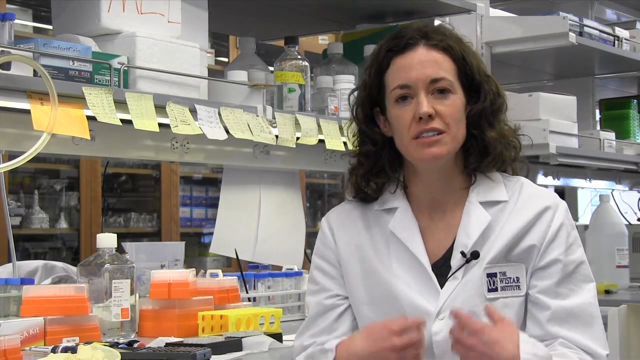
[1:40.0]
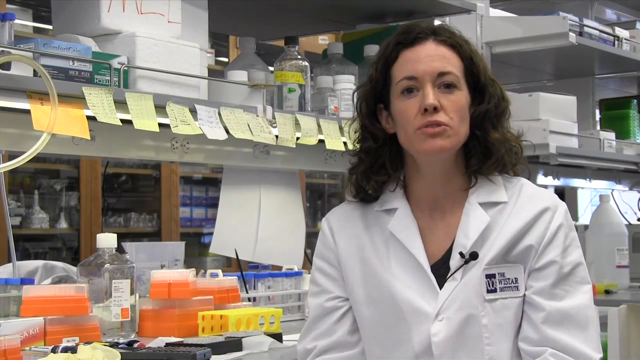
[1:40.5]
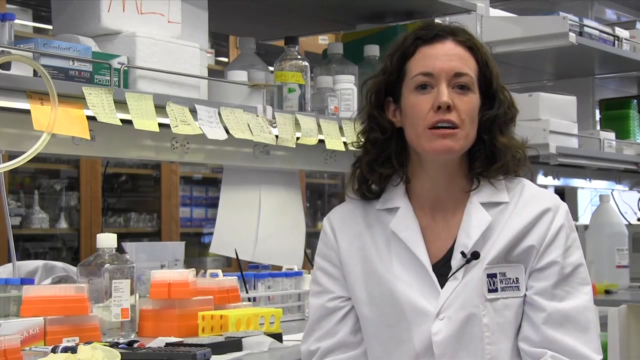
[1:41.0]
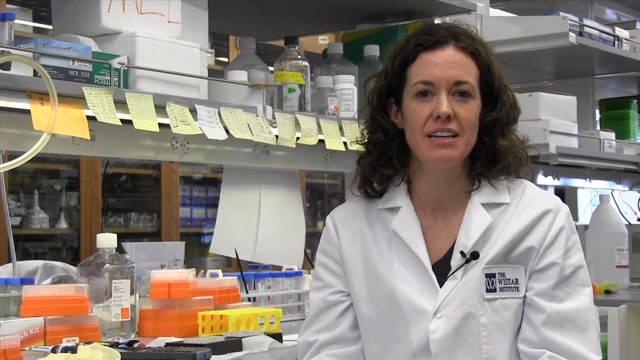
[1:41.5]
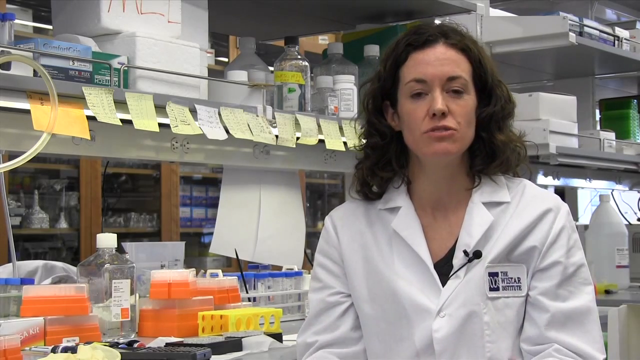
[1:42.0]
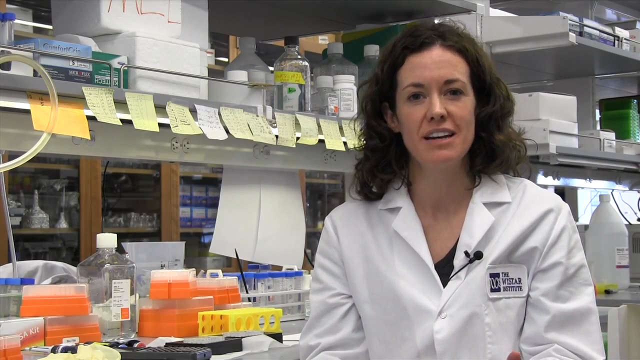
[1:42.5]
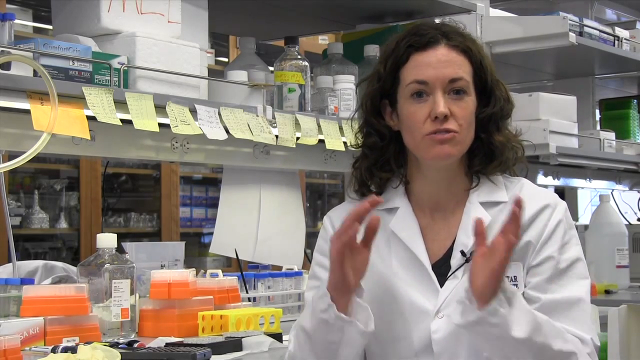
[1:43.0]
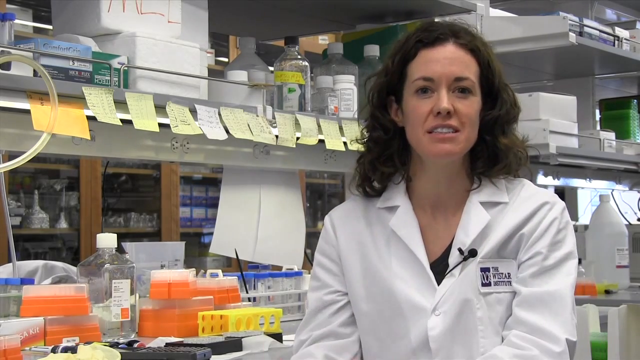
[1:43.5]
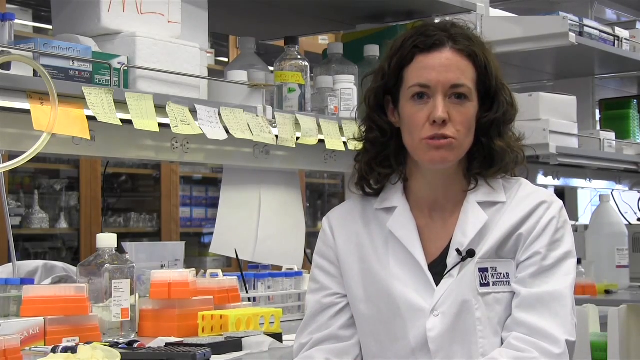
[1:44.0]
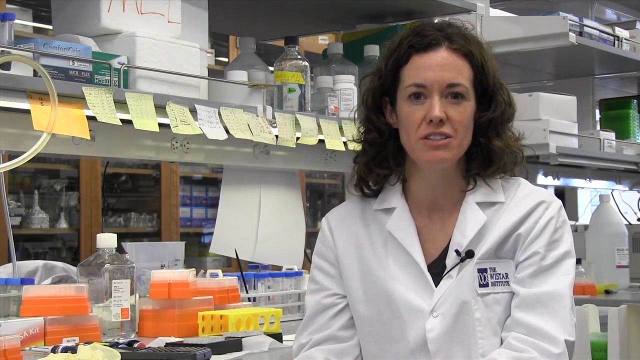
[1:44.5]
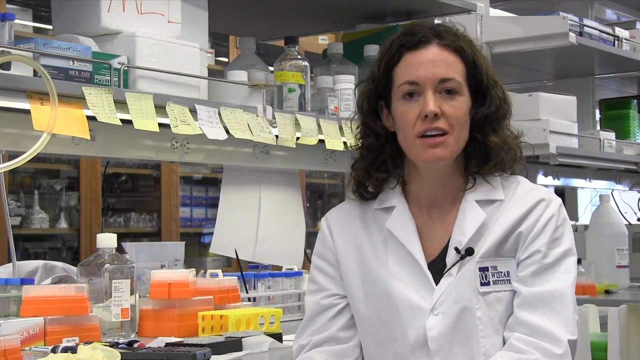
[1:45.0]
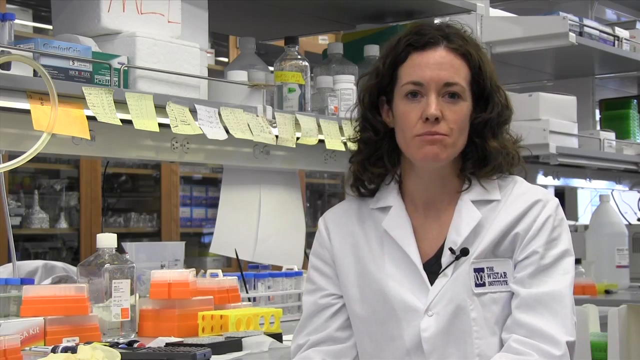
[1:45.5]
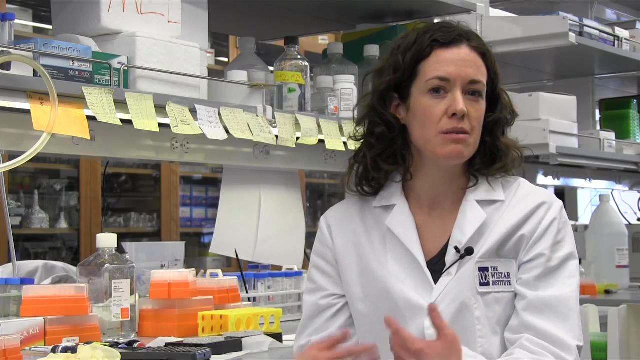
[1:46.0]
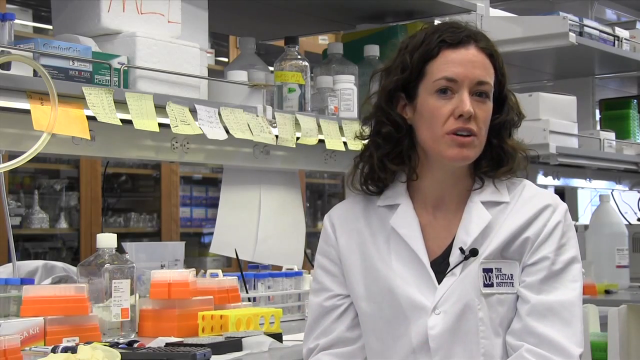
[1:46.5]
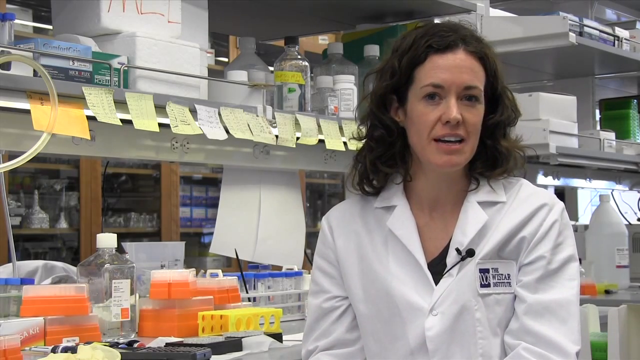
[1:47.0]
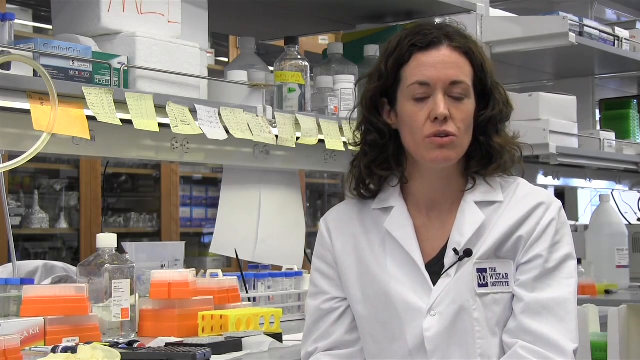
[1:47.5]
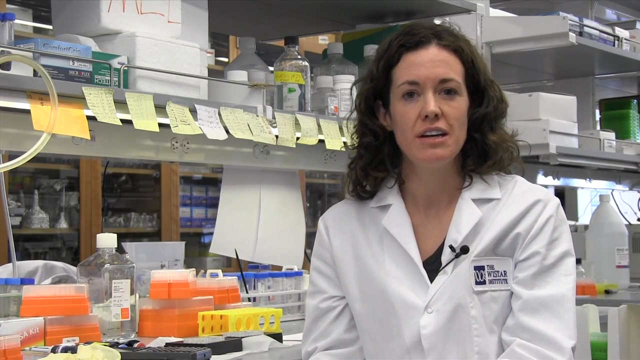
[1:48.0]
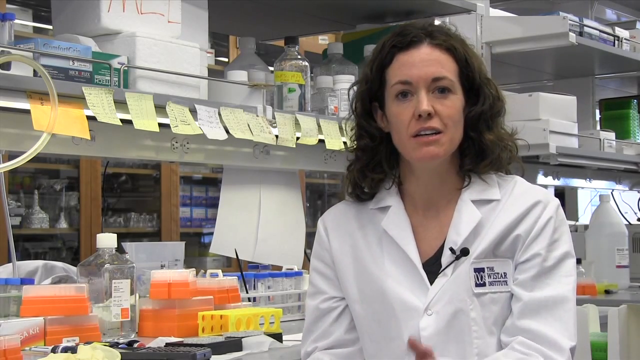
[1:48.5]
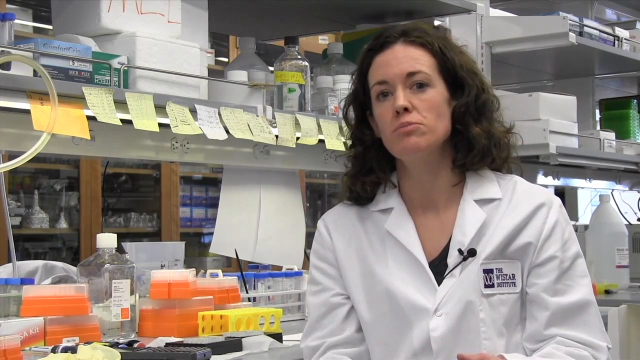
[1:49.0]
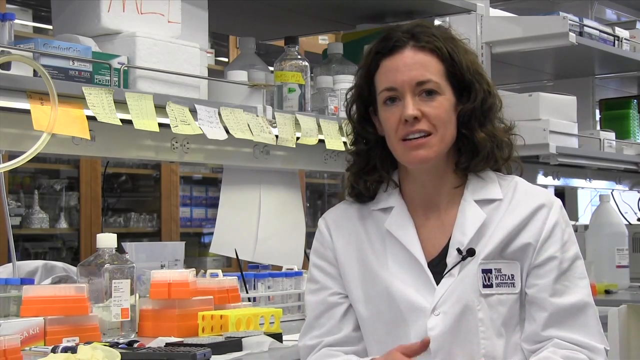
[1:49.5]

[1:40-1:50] In the lab, the woman continues to gesture, first with her right hand and then with both hands, which come up and then go down. At one point she holds her two hands with palms facing each other and shows something moving from her left to her right. She moves her head more than anything, but occasionally makes a rolling motion with her hands, one in front of the other, as she talks.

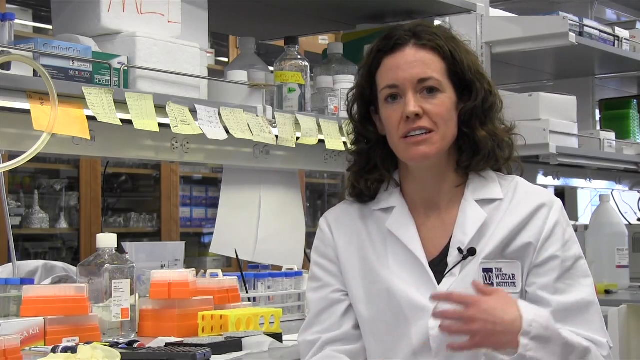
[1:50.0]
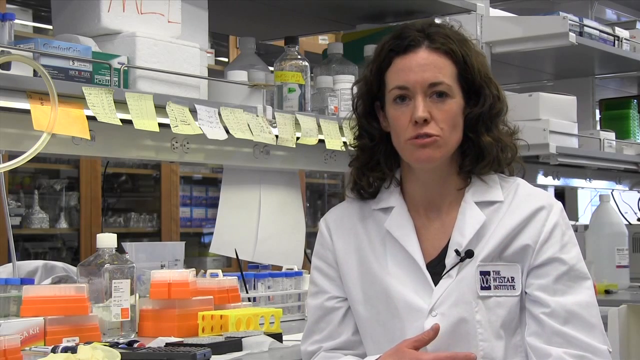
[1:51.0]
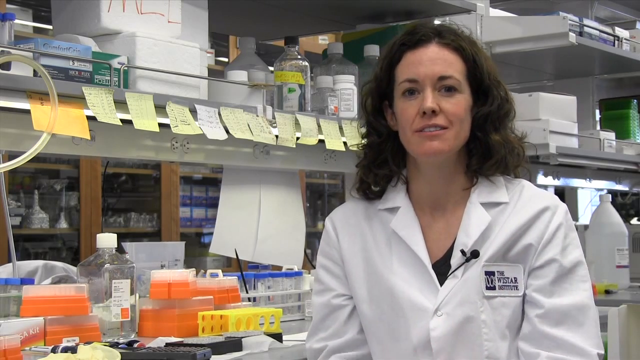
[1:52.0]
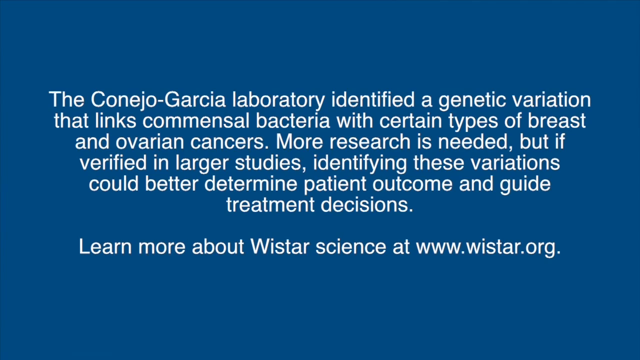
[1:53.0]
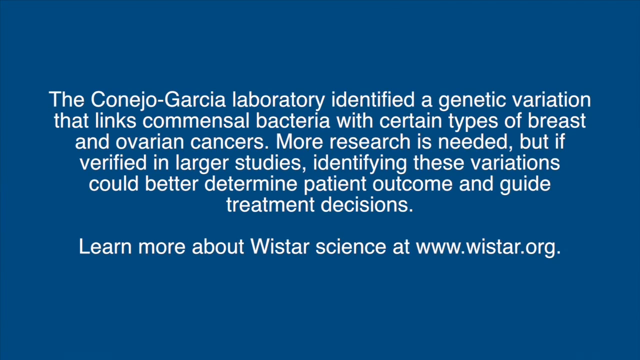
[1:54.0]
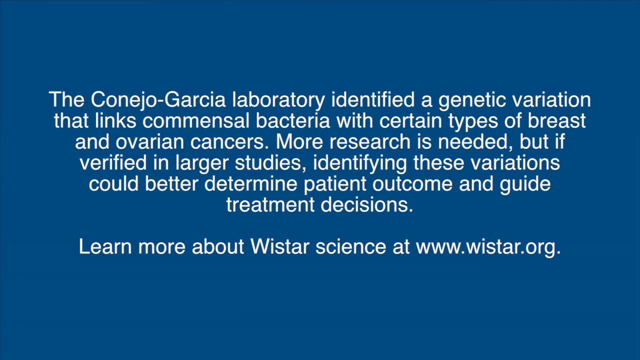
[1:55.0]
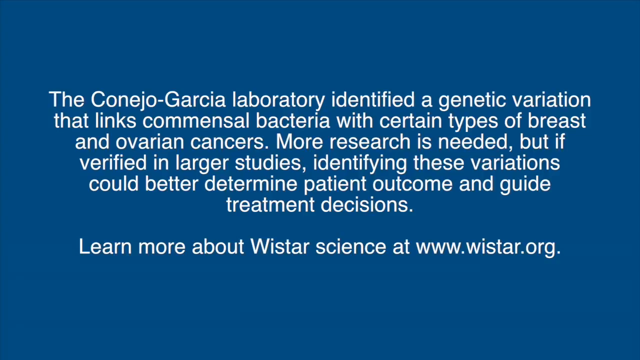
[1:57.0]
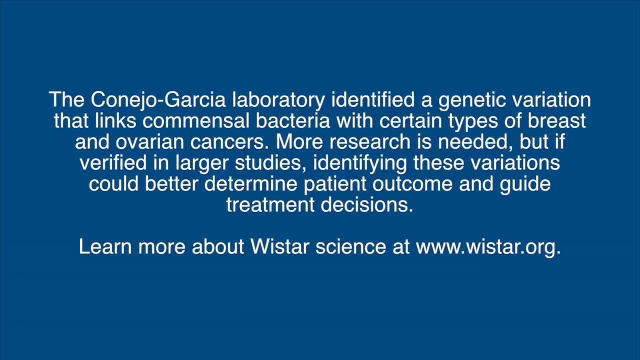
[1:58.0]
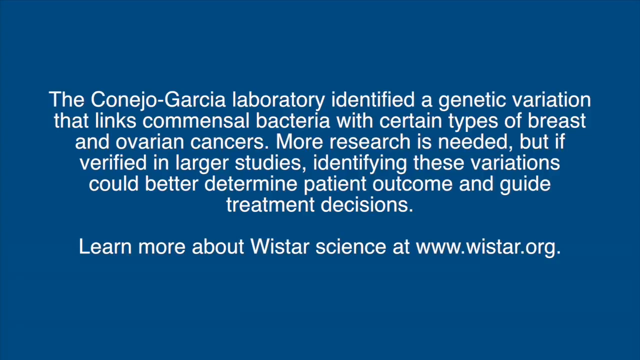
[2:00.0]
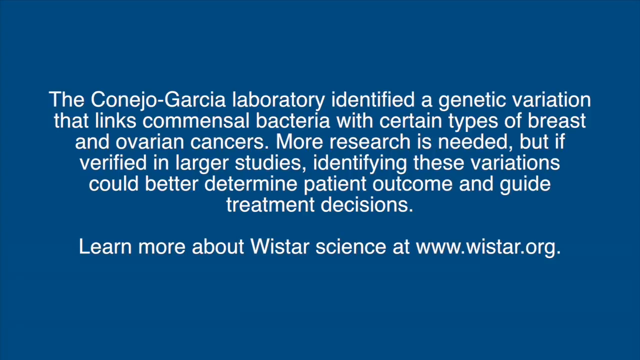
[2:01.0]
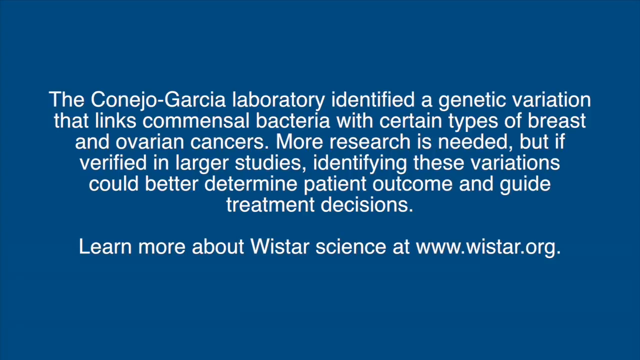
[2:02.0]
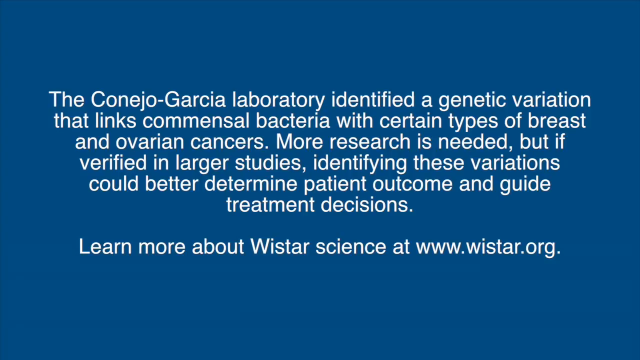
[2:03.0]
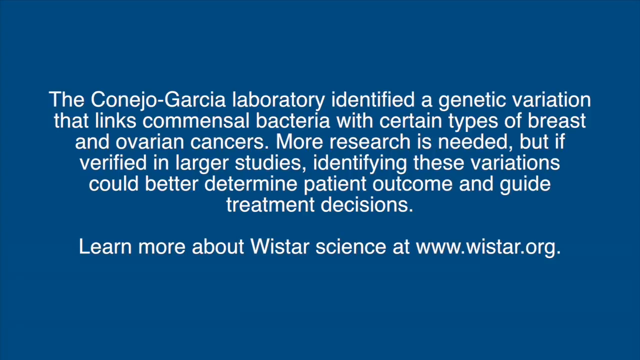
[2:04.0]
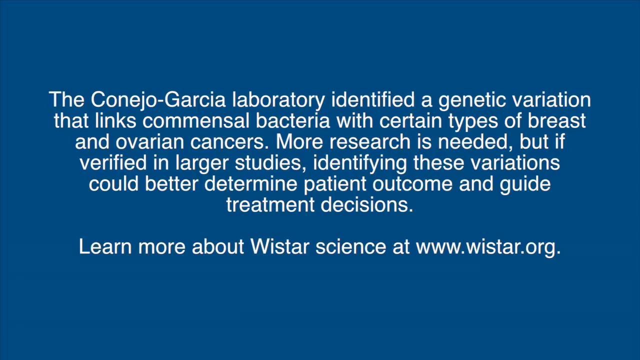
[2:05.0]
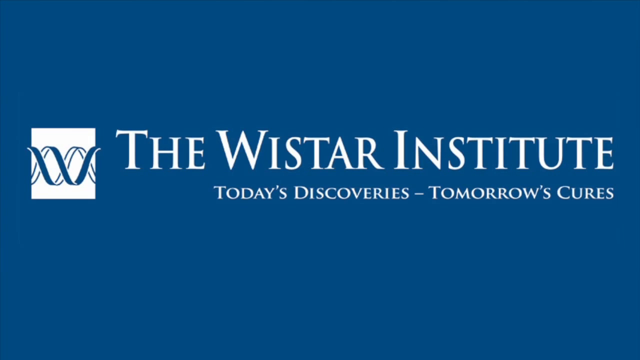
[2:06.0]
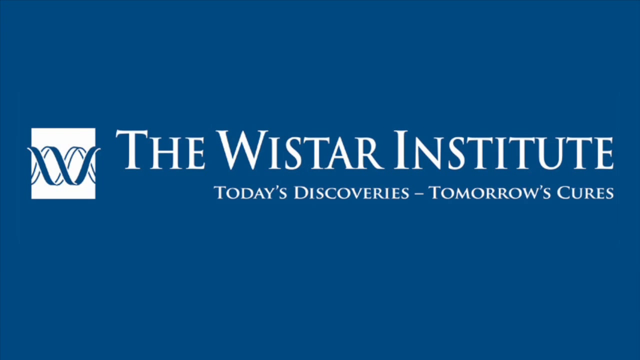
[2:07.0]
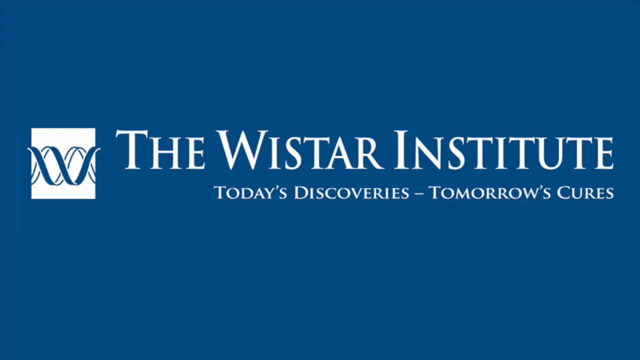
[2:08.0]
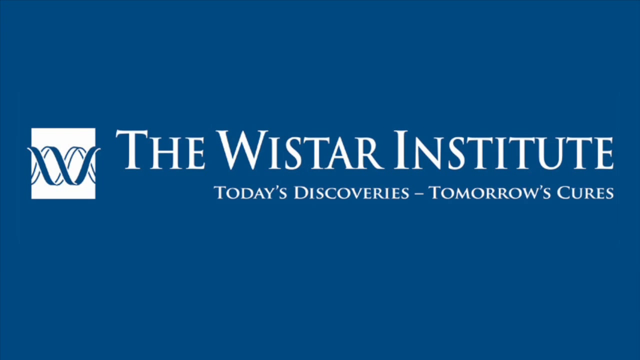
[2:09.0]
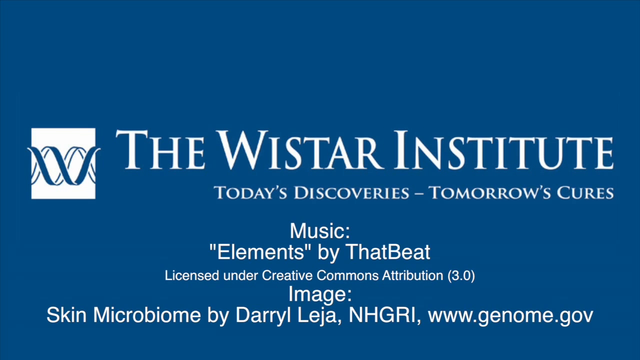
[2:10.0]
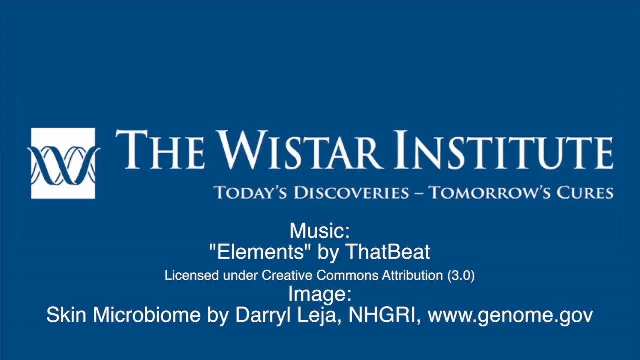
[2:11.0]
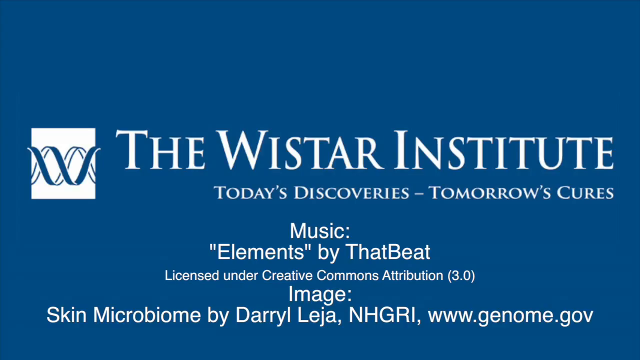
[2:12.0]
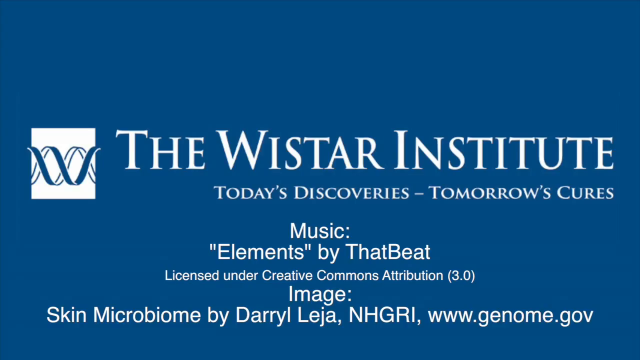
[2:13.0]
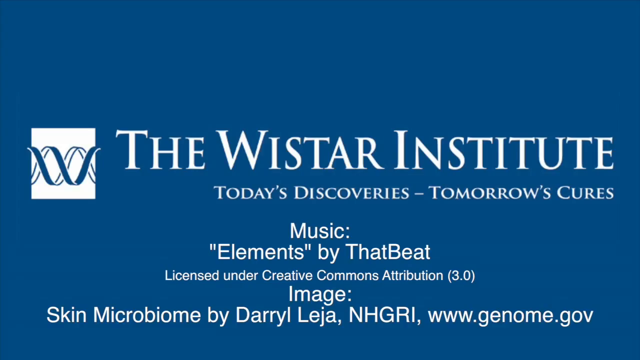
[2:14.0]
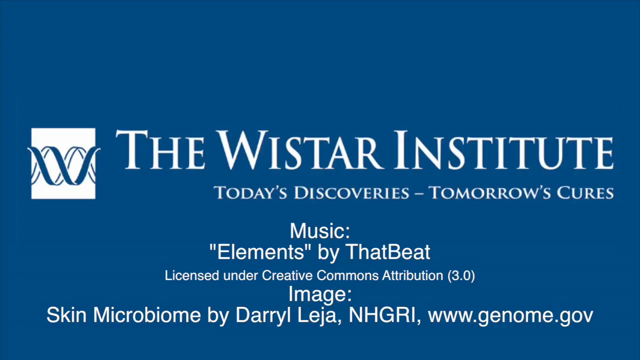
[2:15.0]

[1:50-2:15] The video goes from the woman talking in the lab to the same all dark blue-gray background. White text reads "the Conejo-Garcia Laboratory identified a genetic variation that links commensal bacteria with certain types of breast and ovarian cancers. More research is needed," continuing with "identifying these variations could better determine patient outcome and guide treatment decisions." After a small space, a line reads "learn more about Wistar science at www.wistar.org." Then the same blue background returns with the original graphic: the helix in the white box, "the Wistar Institute," and "today's discoveries, tomorrow's cures" underneath, now with credits added below. In centered white text it reads "music," then a credit beginning "elements by," then in tiny white text "licensed under Creative Commons Attribution 3.0." Underneath is "image," followed by what looks like image credits, with the last line of white text reading "Skin microbiome by Darryl Leja, NHGRI, www.genome.gov."